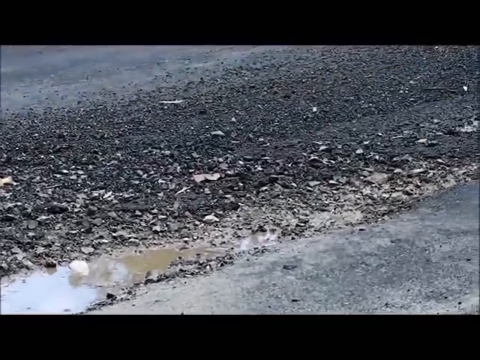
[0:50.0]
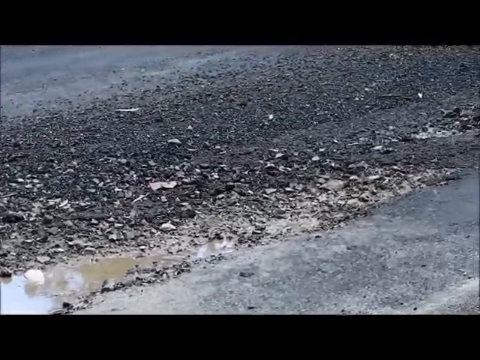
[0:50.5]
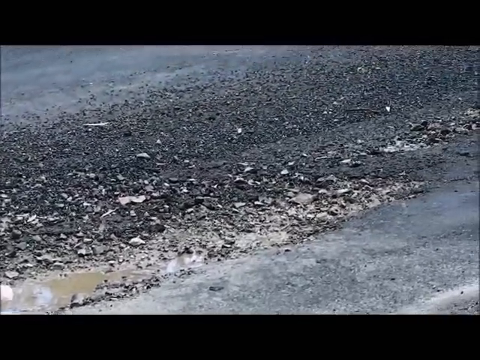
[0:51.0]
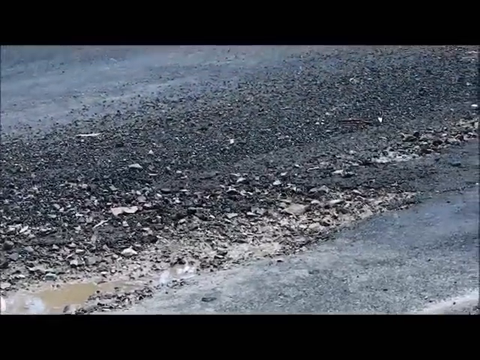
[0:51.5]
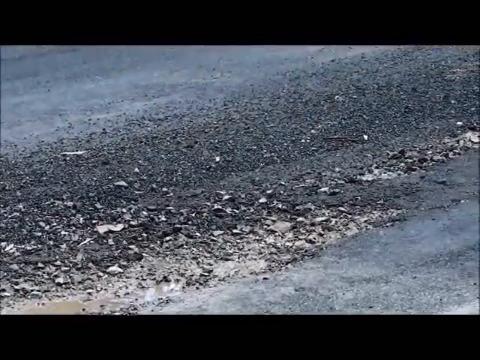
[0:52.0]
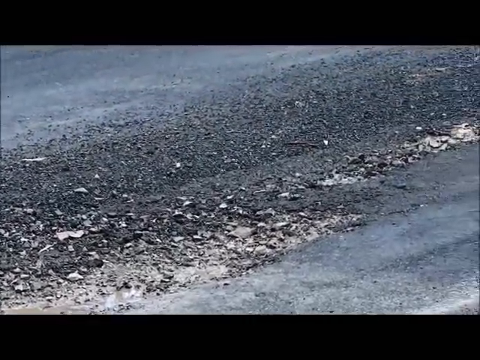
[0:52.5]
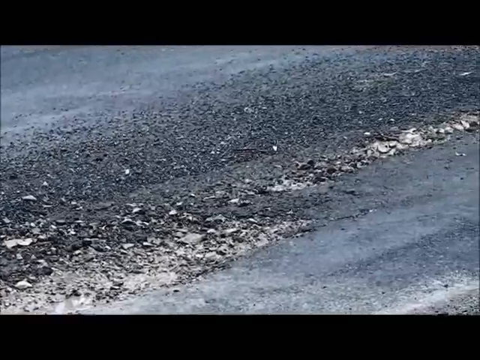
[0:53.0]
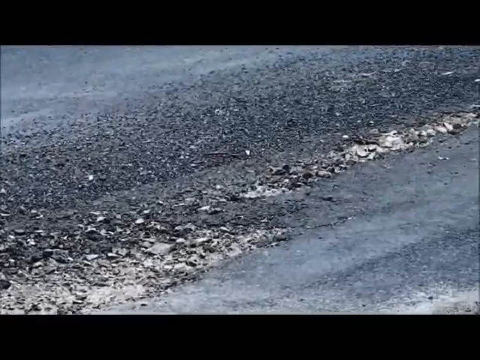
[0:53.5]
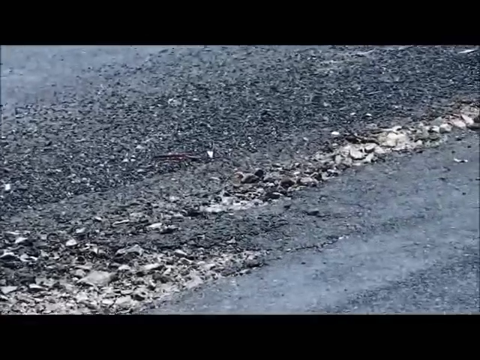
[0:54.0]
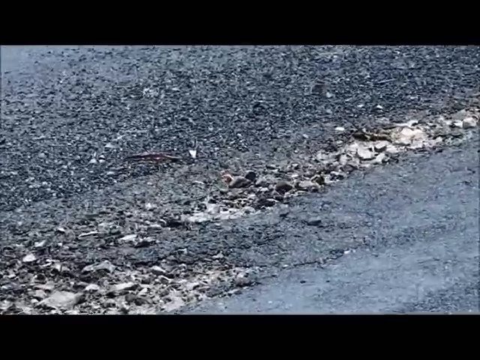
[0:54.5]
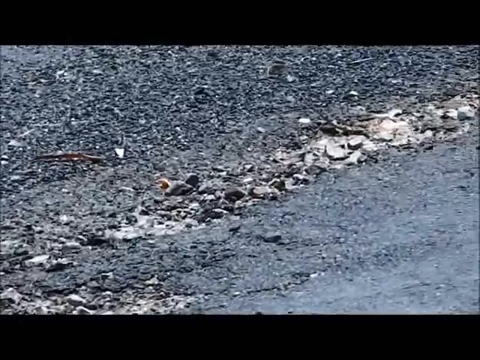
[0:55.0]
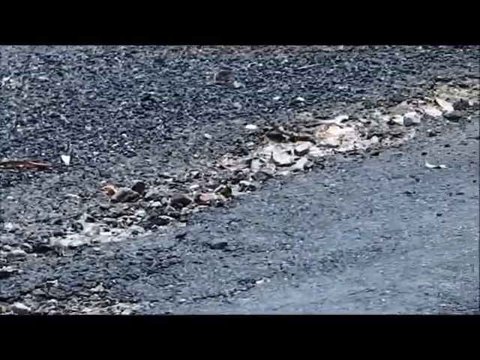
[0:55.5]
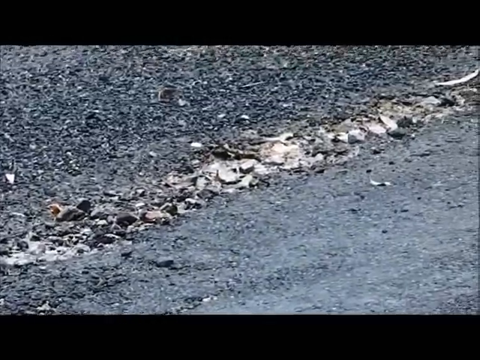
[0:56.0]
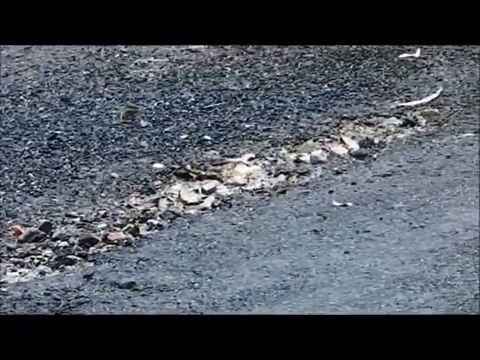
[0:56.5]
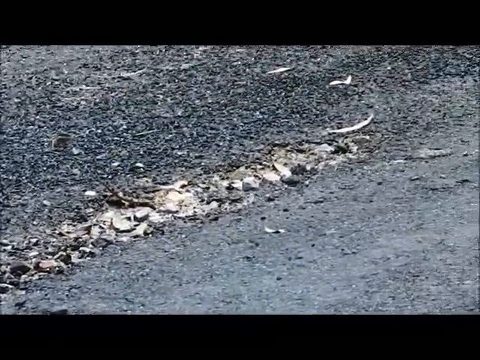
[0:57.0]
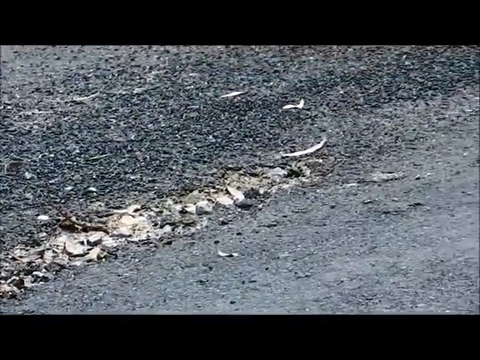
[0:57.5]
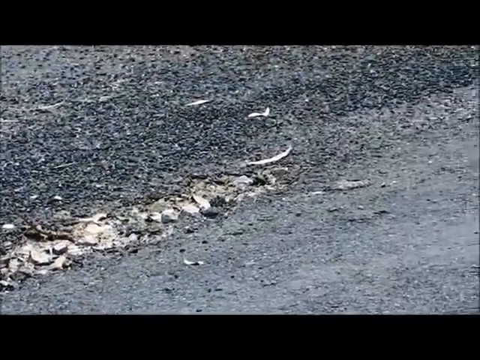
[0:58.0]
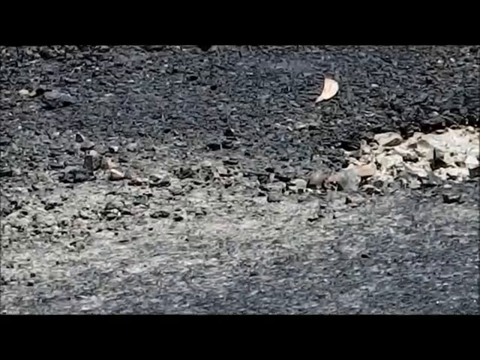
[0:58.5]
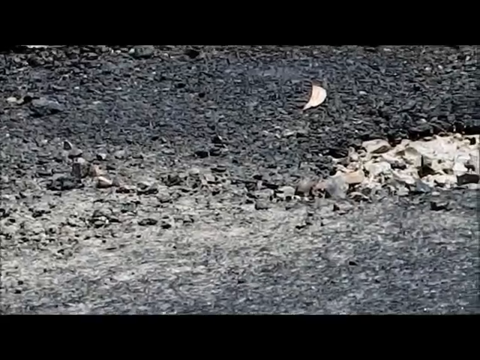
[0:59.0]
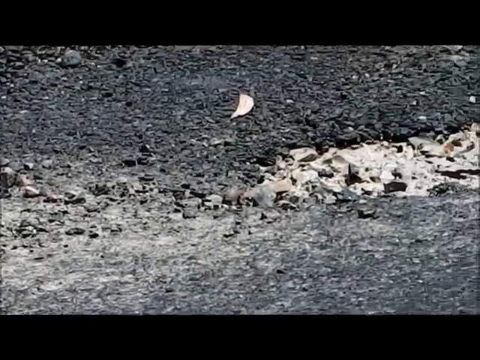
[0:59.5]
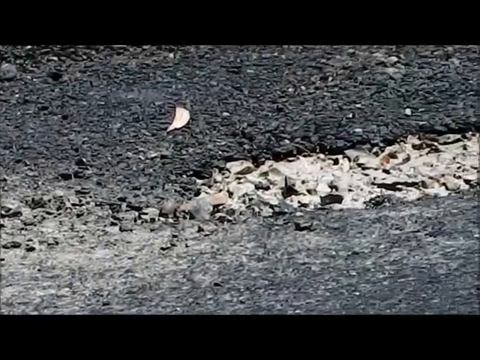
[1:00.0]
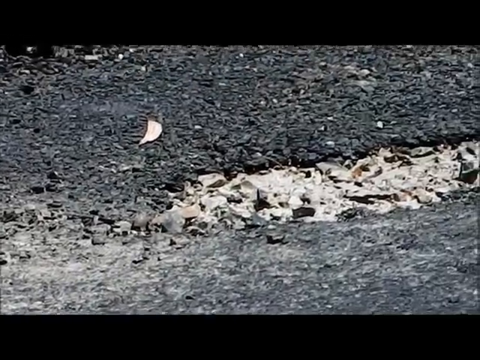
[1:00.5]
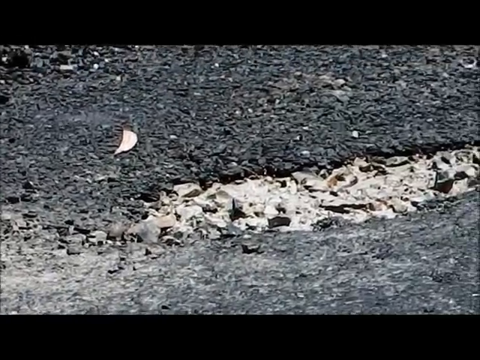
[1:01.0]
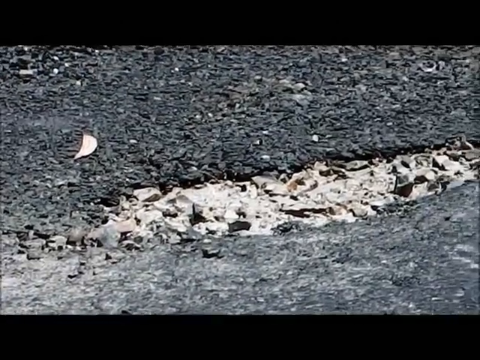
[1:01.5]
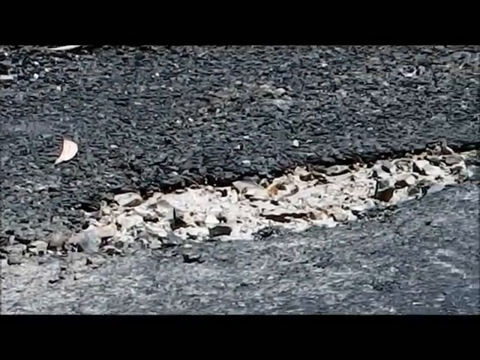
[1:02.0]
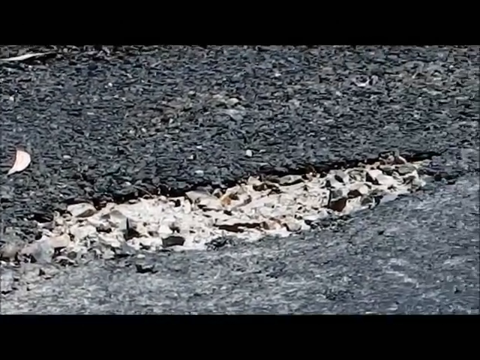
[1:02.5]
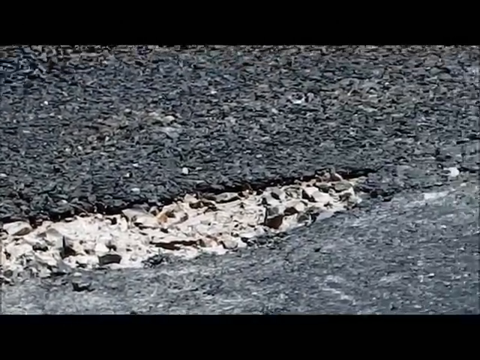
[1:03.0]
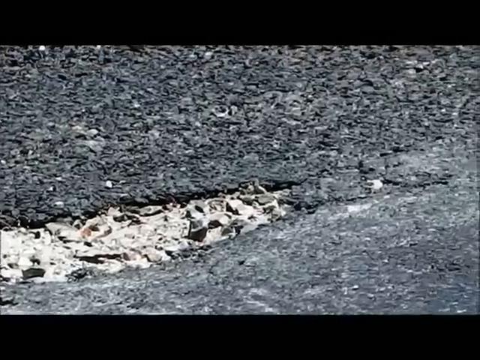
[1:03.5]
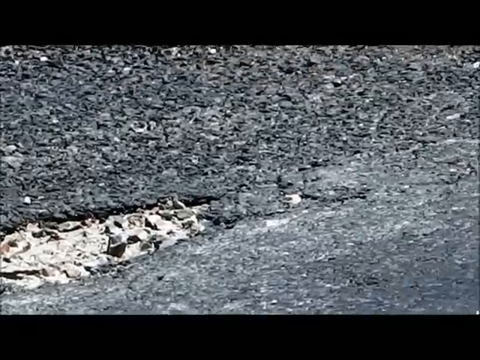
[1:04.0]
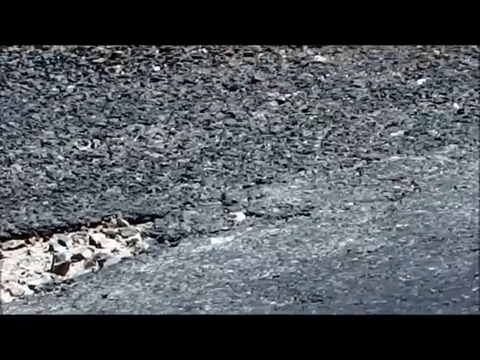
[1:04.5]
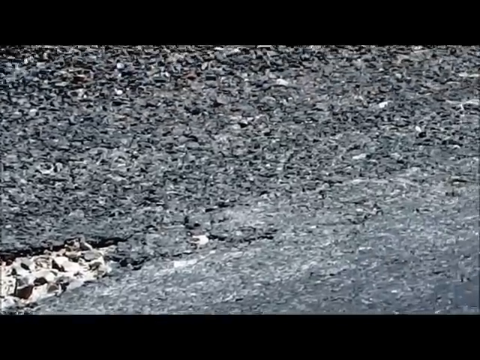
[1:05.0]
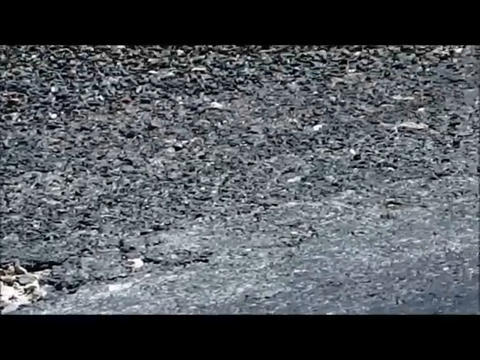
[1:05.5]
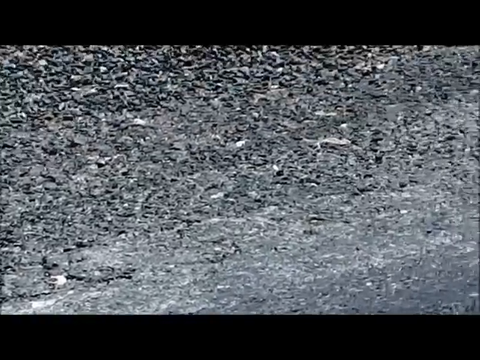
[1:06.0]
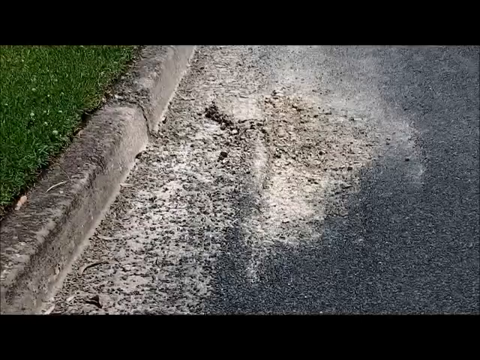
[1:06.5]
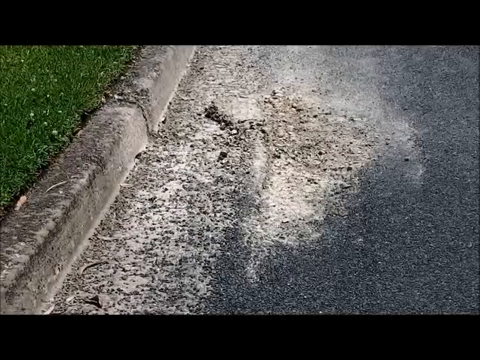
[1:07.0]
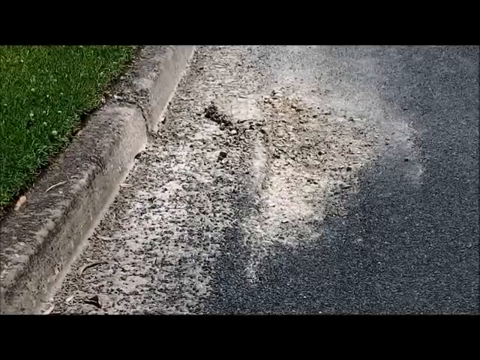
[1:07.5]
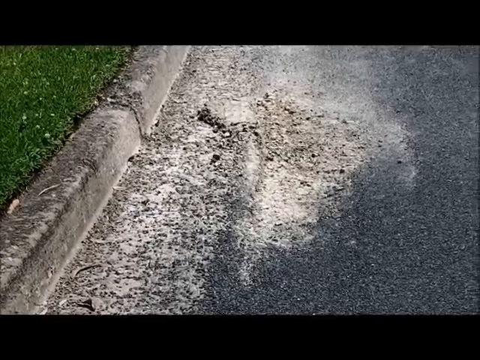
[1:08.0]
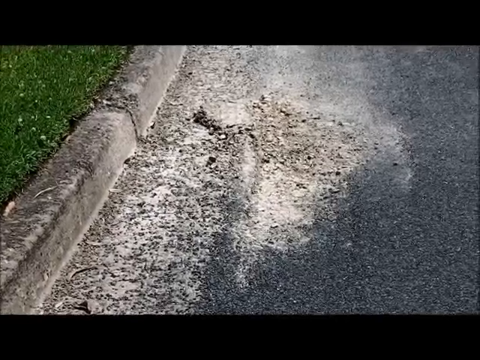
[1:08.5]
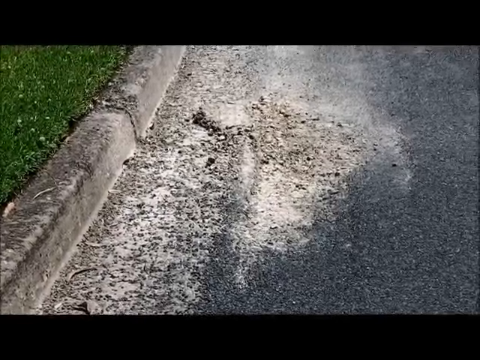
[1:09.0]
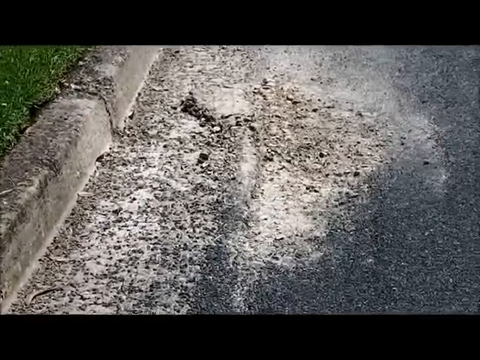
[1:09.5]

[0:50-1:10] The camera keeps moving upward to the right over more broken debris and chips from the road. It zooms in closer on pieces that look like rocks, and then white-colored broken pieces appear, showing how damaged the road is, with broken-up rubble. The scene changes to show a curb on the left side and the road surface on the right side. The road looks very deteriorated: the right side looks very dark gray, while the area of the road next to the curb looks very white and chalky. Green grass is in the top left corner. The view zooms in closer to the broken area of the road, which in some areas kind of looks very white and chalky.